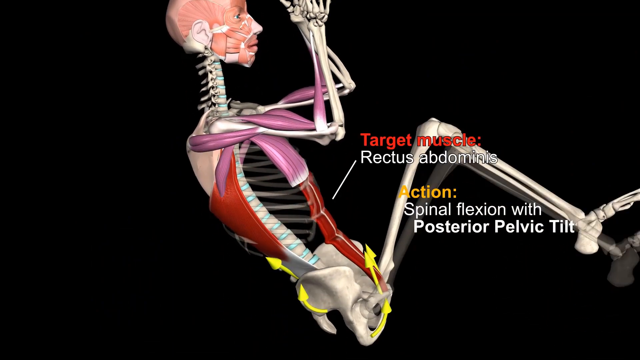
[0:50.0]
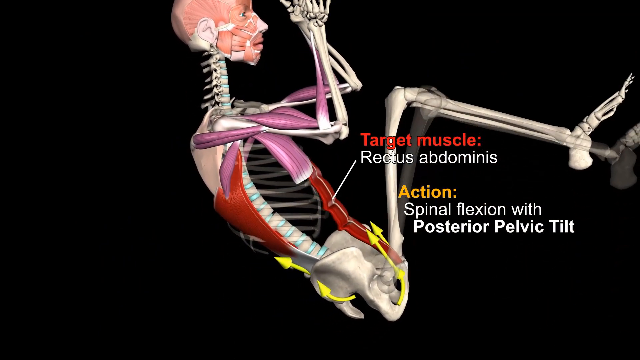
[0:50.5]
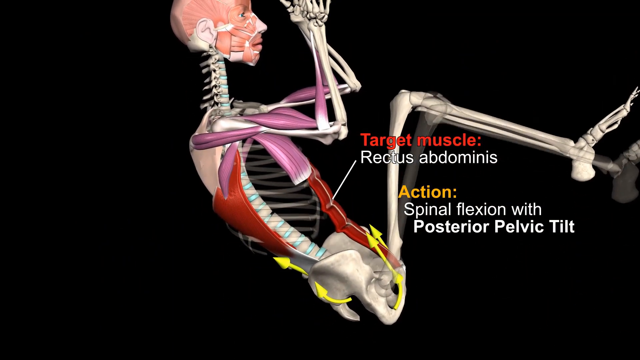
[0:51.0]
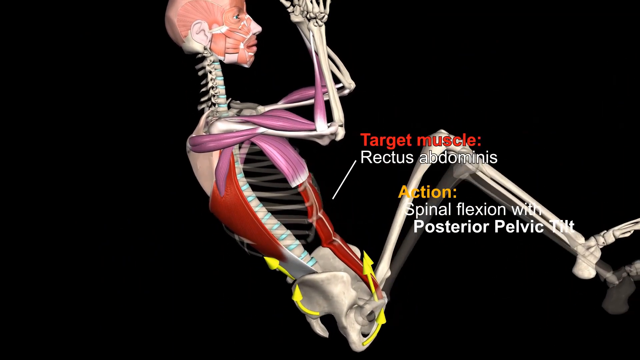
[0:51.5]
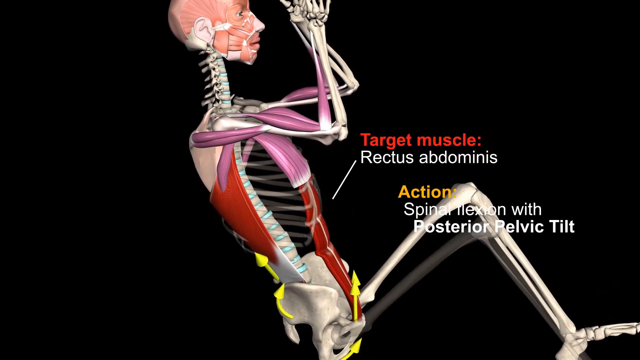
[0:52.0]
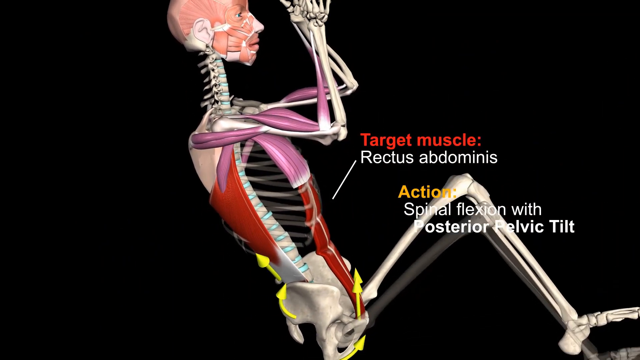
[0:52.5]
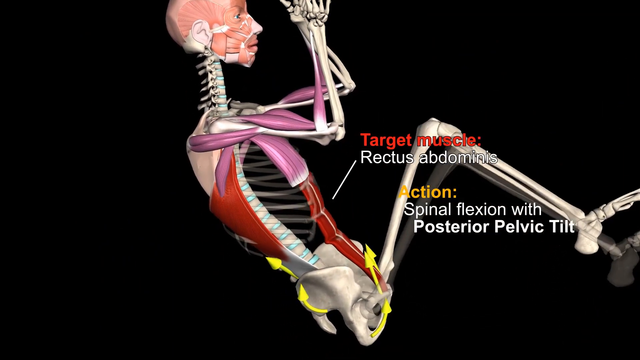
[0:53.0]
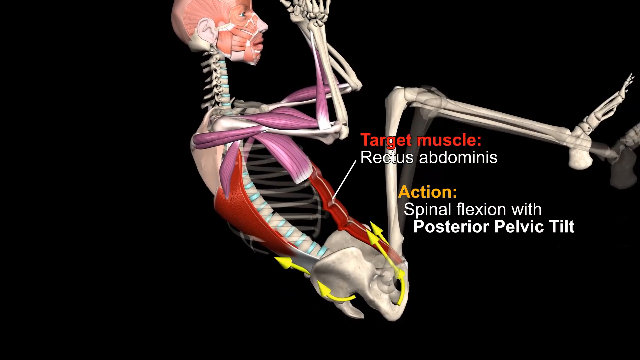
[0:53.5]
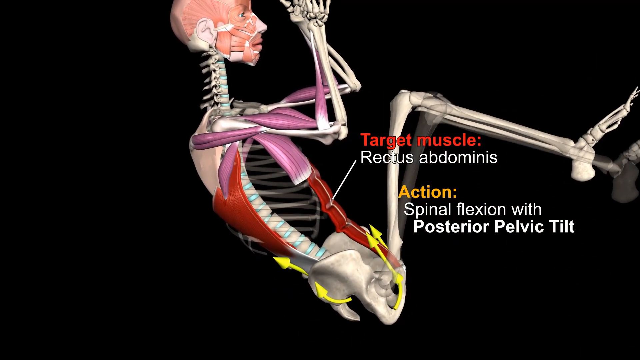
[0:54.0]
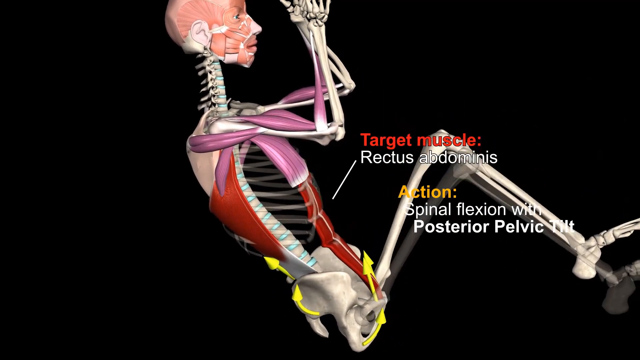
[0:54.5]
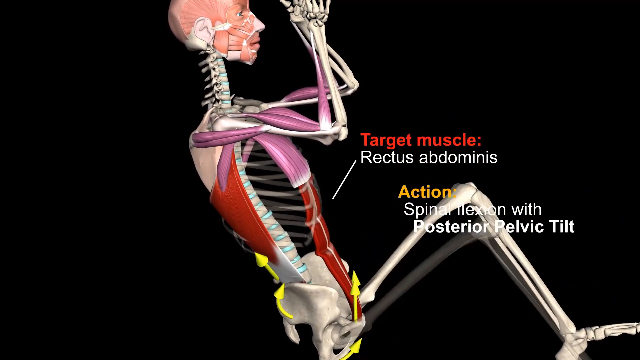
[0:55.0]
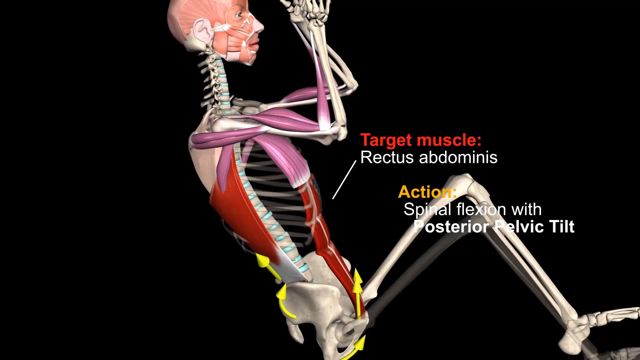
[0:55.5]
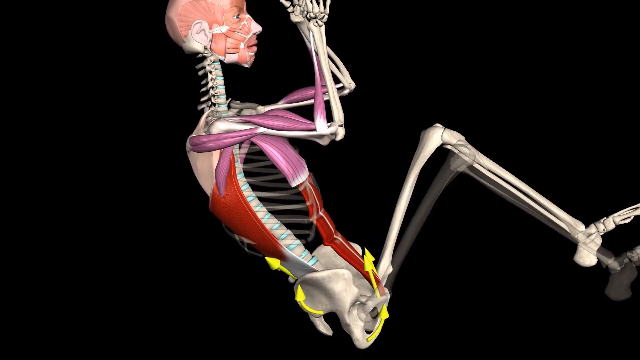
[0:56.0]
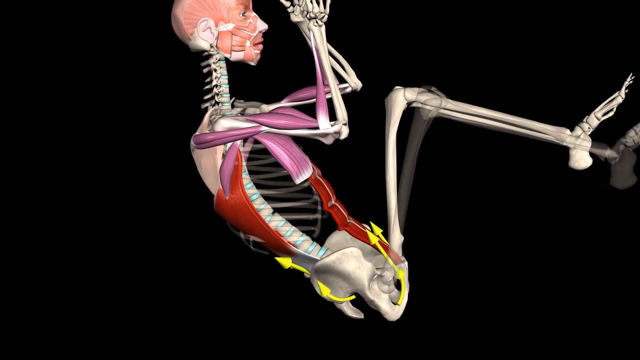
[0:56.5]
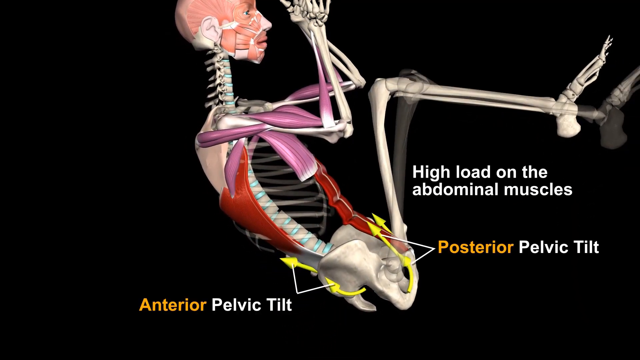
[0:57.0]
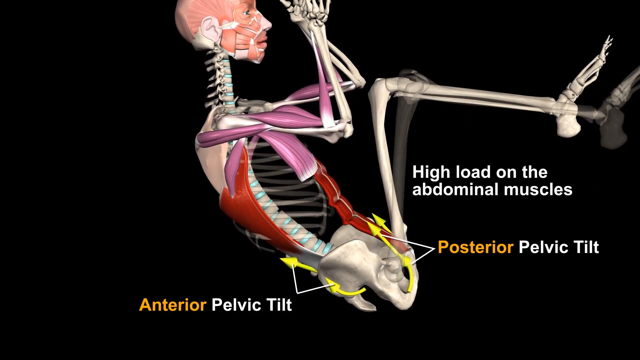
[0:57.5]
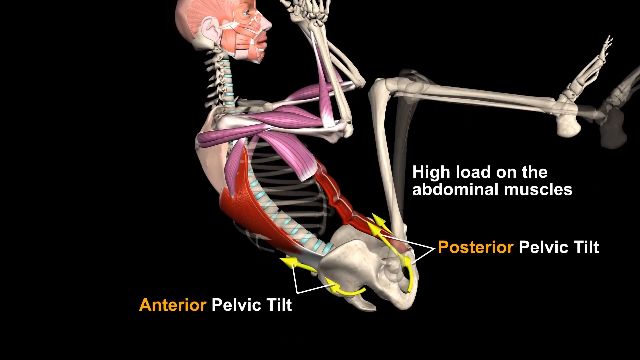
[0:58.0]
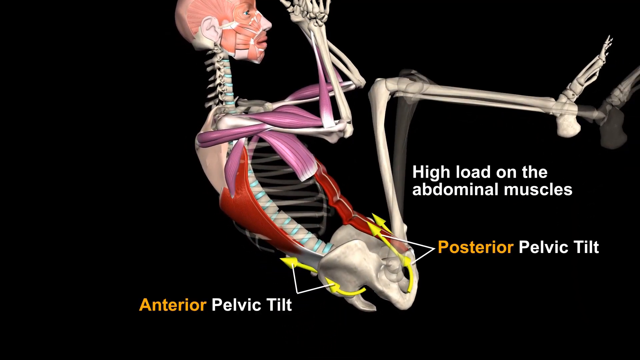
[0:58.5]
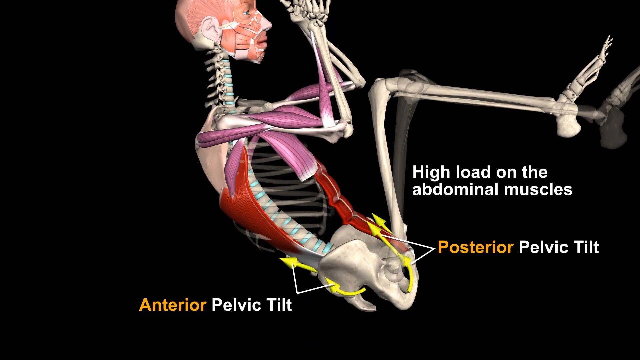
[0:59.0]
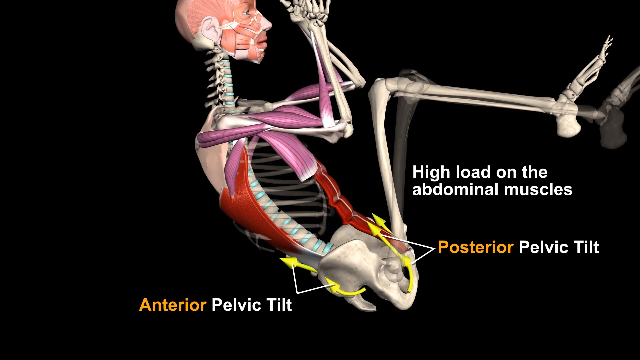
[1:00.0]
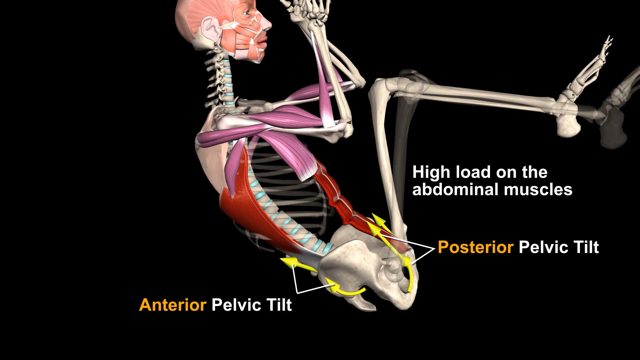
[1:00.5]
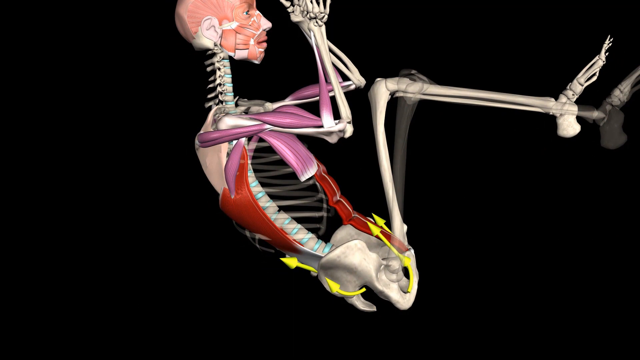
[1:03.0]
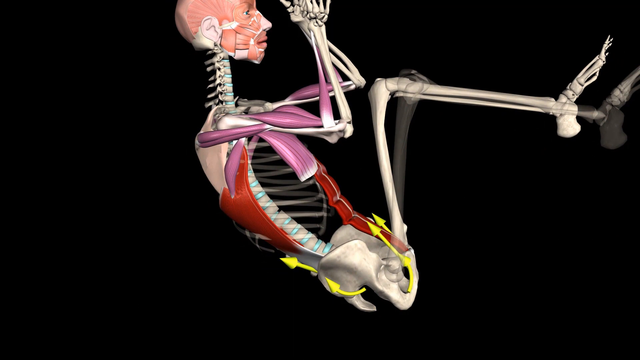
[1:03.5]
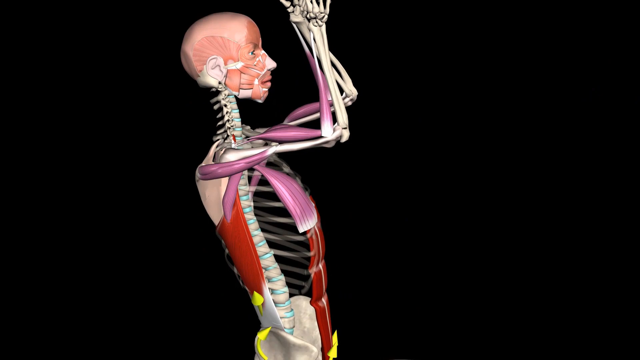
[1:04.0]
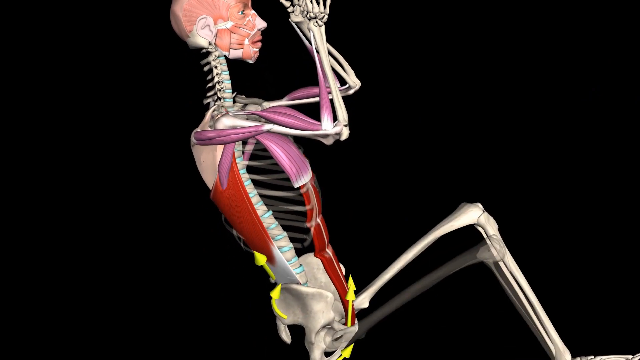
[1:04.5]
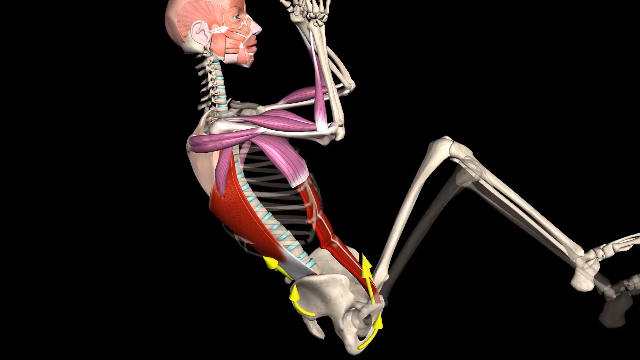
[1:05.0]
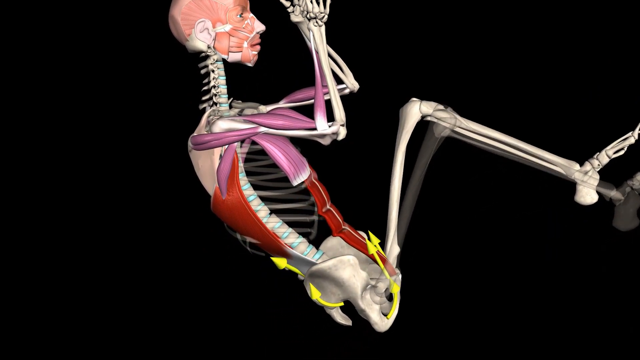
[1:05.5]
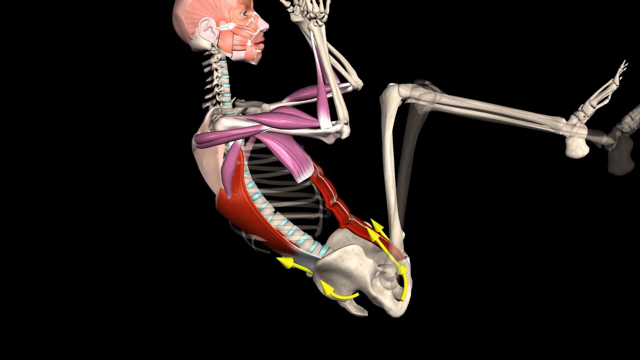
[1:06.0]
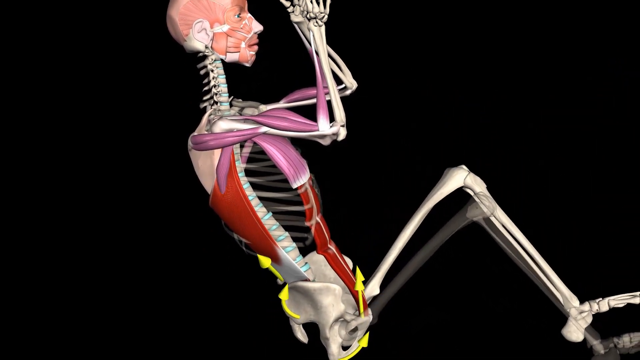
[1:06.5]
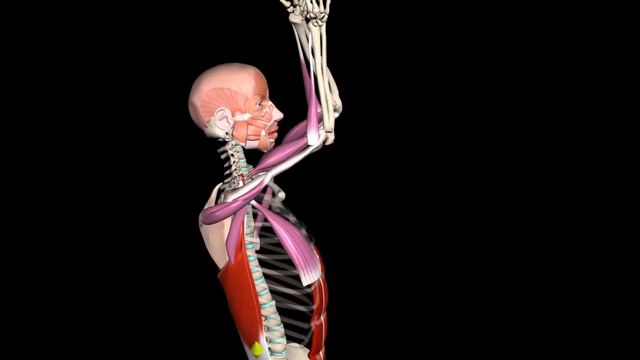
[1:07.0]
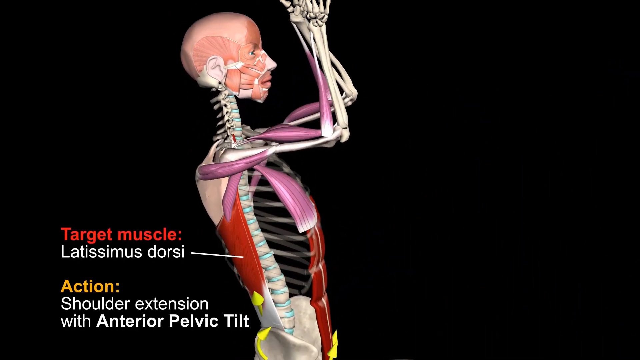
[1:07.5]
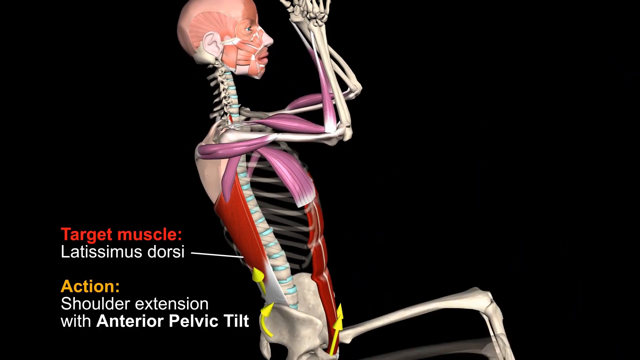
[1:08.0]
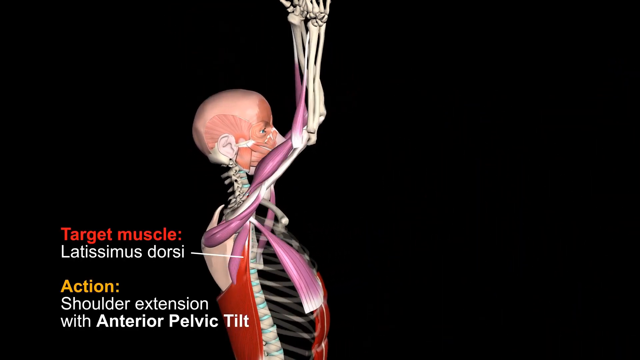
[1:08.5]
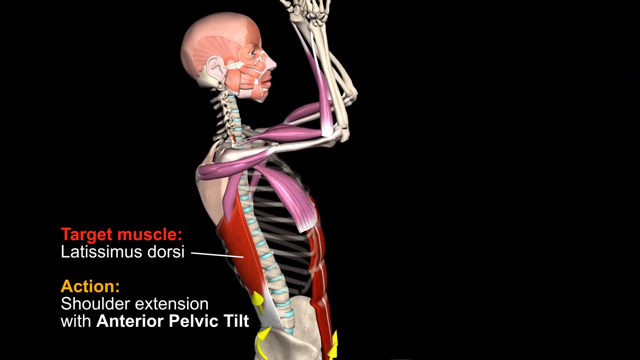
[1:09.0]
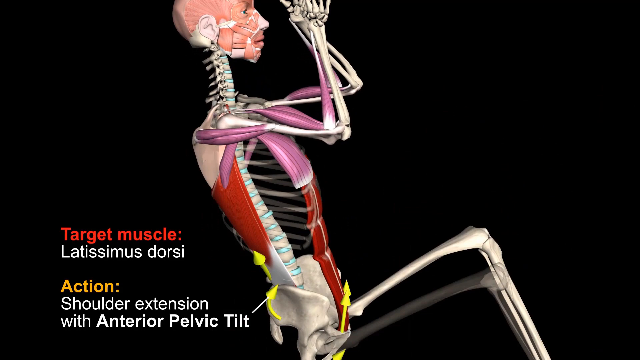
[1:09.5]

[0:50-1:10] A 3D computer-generated skeleton does a pull-up, seen from the right against a plain black background. "Target muscle" and "action" are labeled on the screen, with the target muscle label having a white line pointing to the stomach muscles. Yellow arrows are around the skeleton's pelvis. The skeleton holds on to a bar at the top of the screen, which isn't visible. It pulls itself up and bends its knees, and the knees almost touch its elbows. The image then pauses and more text appears on the screen reading "high load on the abdominal muscles, posterior pelvic tilt, anterior pelvic tilt," with small white lines pointing to different muscles and bones on the skeleton's body. Most of the text is white, but a couple of words are orange. The skeleton then does the pull-up repeatedly, and the target muscle and action are listed again. The skeleton's face is mostly bone, but there are pink and red muscles on the body and face; the eyes, nose and mouth are also depicted, so it looks almost like a realistic face.